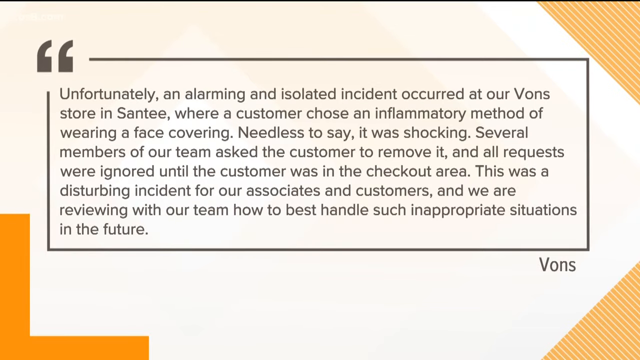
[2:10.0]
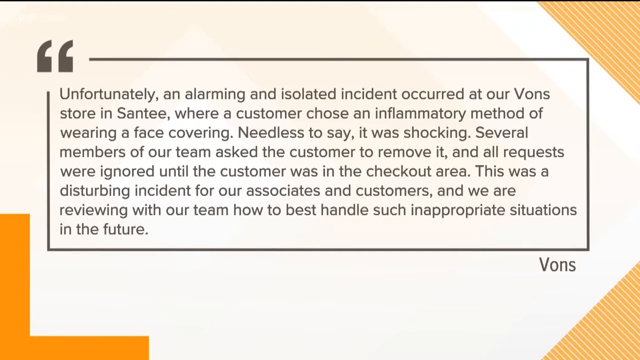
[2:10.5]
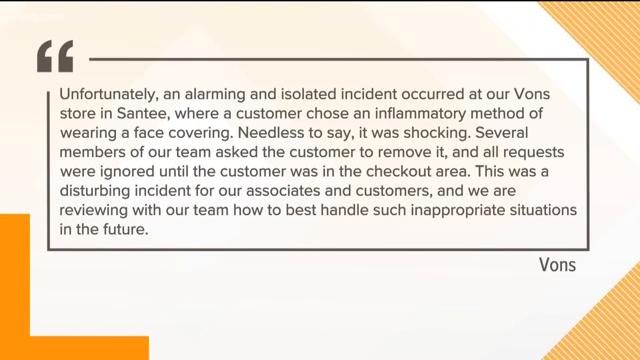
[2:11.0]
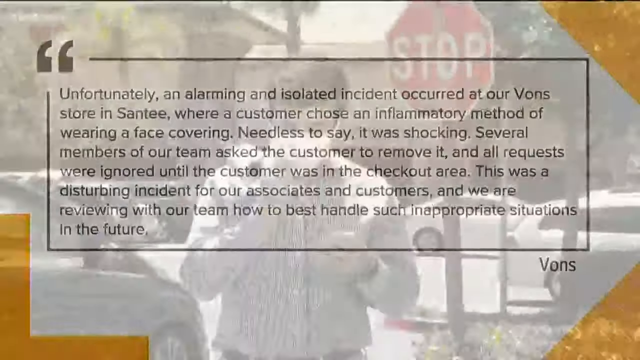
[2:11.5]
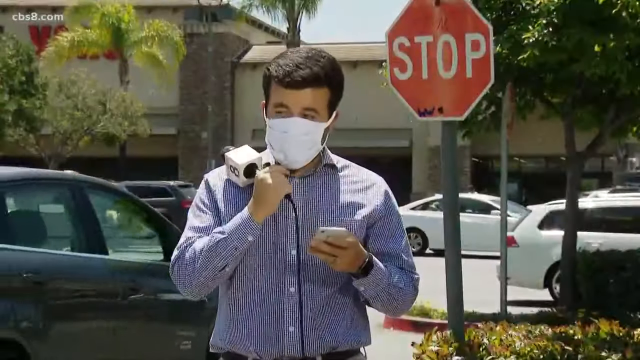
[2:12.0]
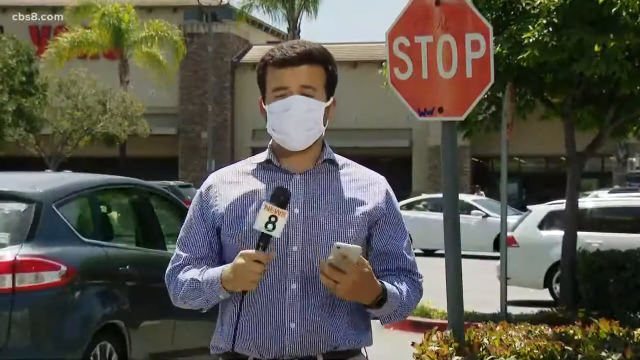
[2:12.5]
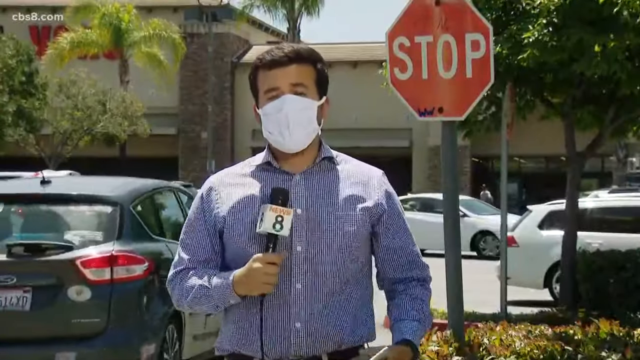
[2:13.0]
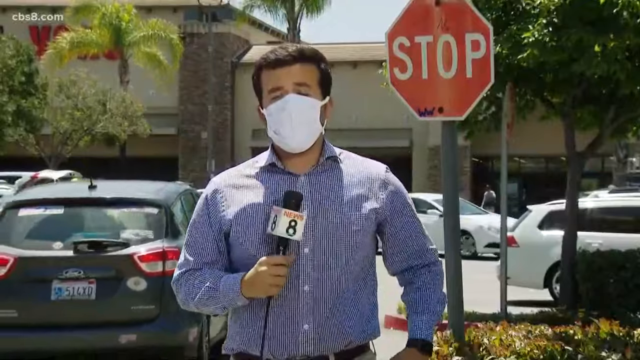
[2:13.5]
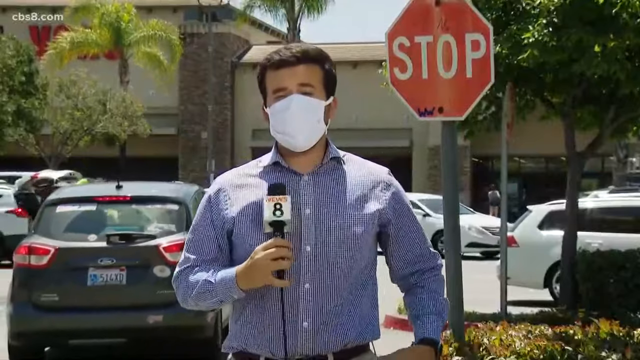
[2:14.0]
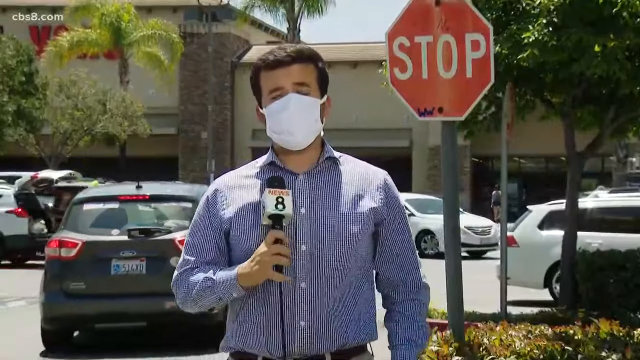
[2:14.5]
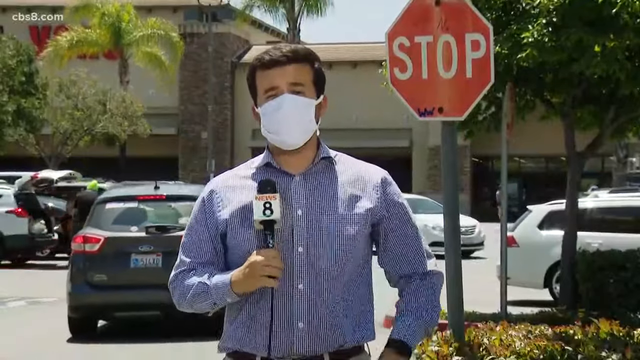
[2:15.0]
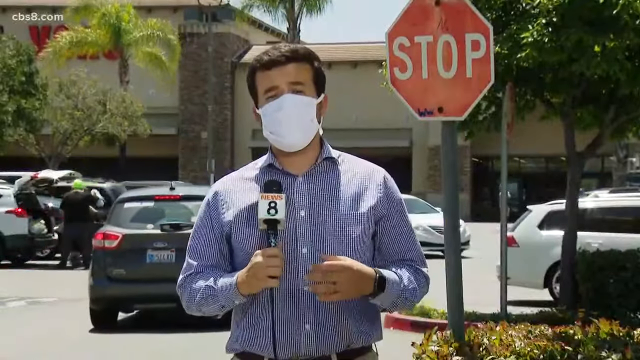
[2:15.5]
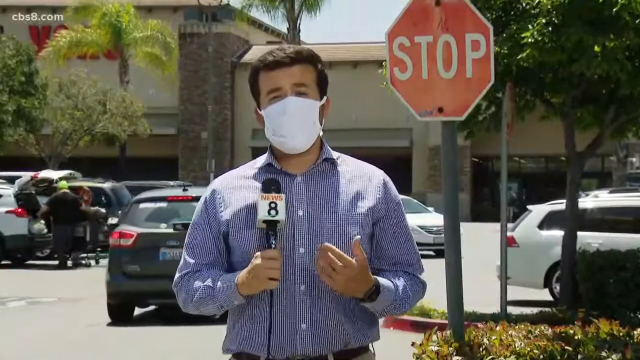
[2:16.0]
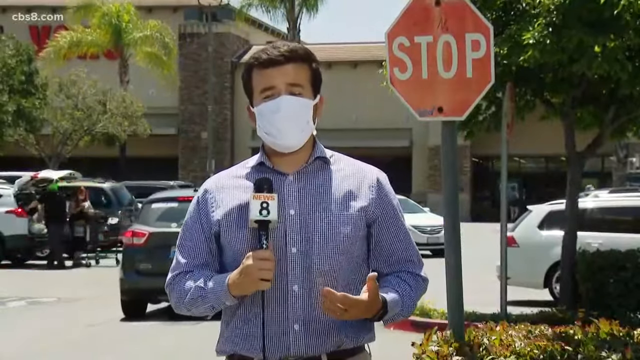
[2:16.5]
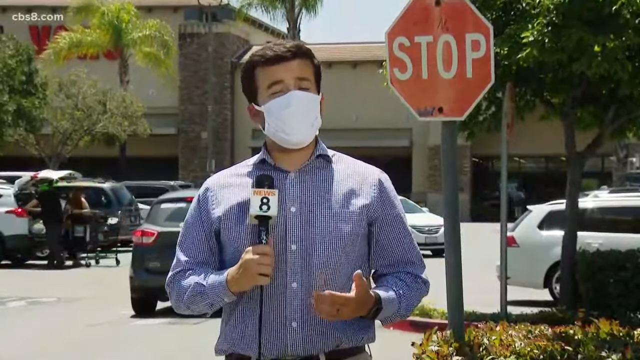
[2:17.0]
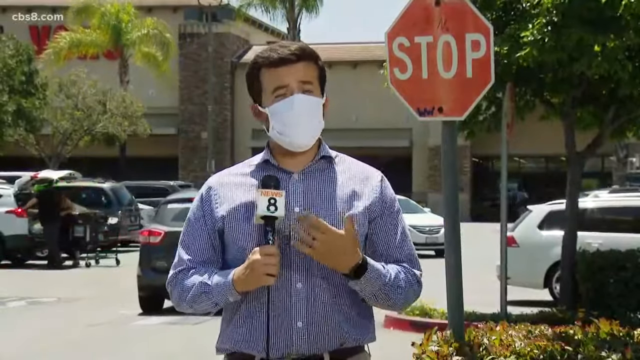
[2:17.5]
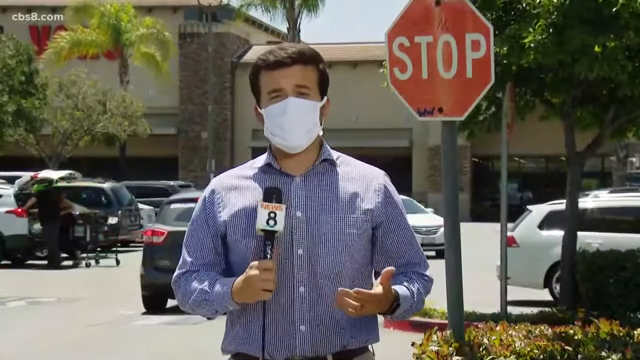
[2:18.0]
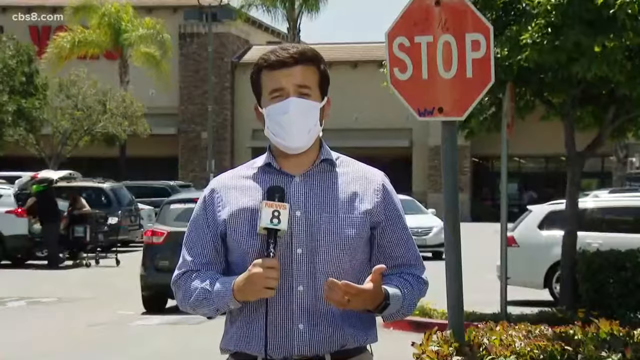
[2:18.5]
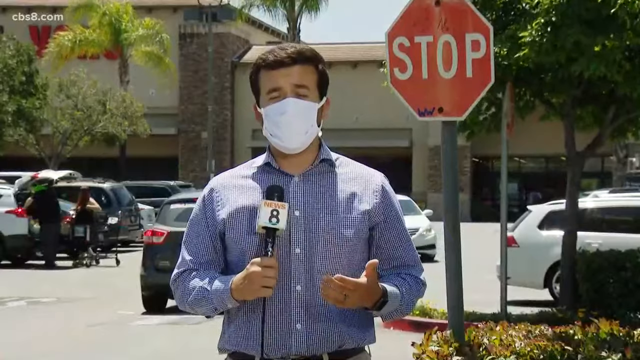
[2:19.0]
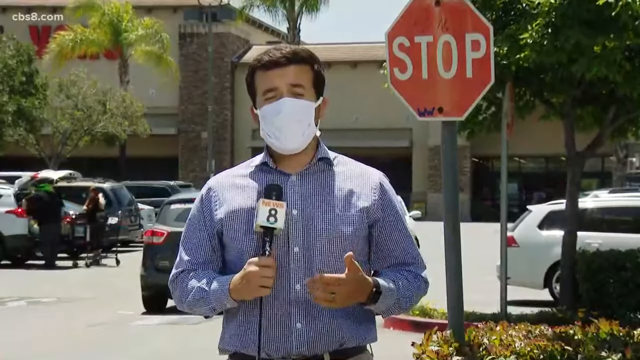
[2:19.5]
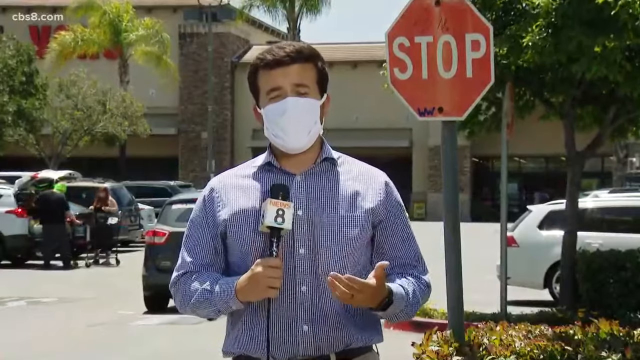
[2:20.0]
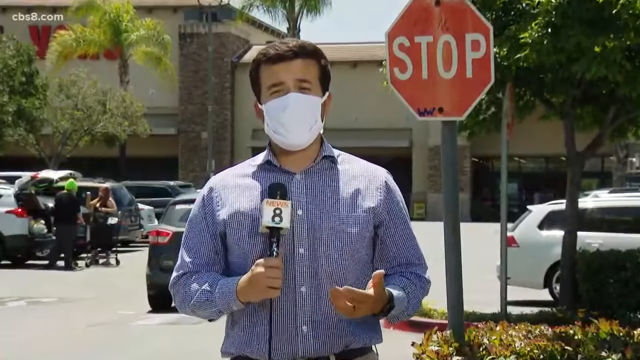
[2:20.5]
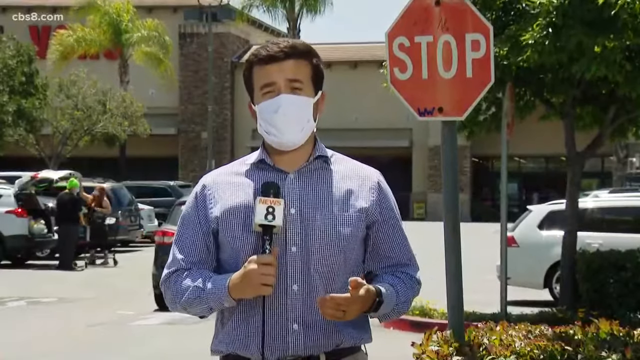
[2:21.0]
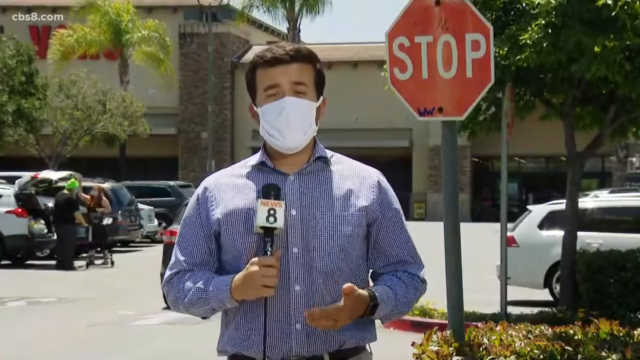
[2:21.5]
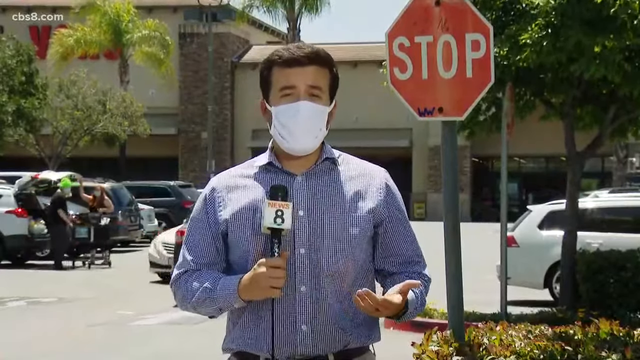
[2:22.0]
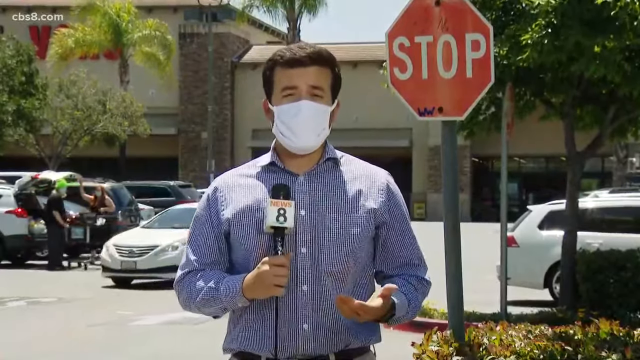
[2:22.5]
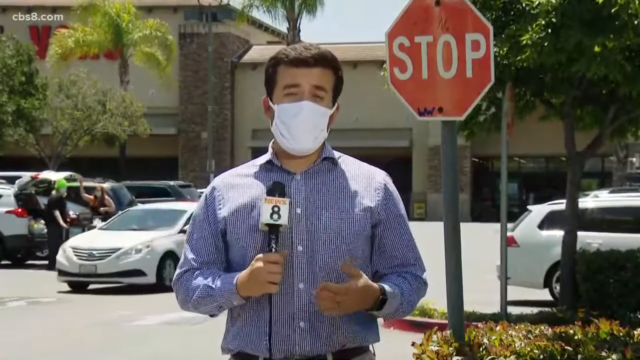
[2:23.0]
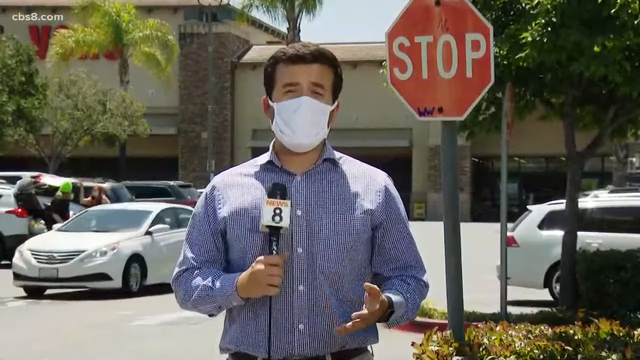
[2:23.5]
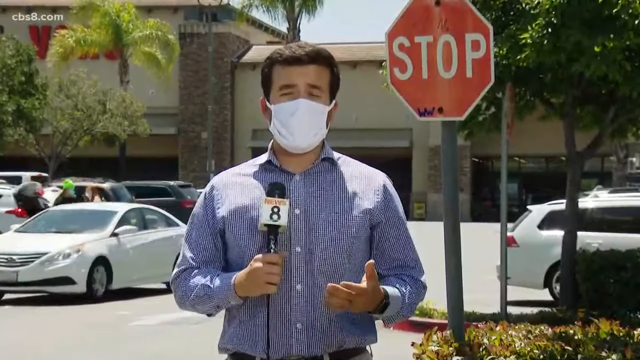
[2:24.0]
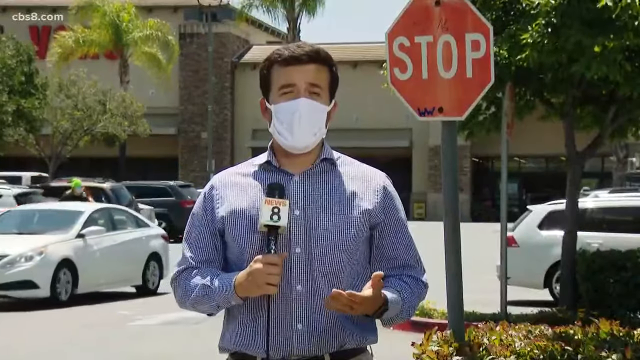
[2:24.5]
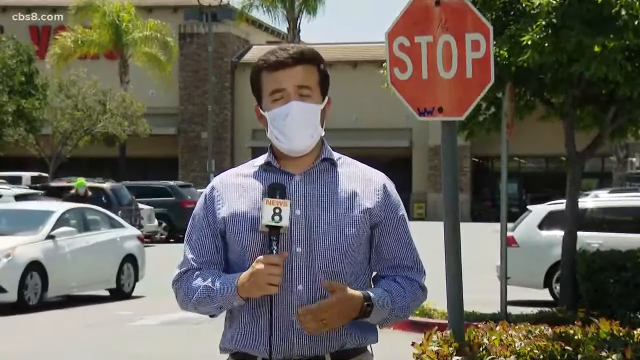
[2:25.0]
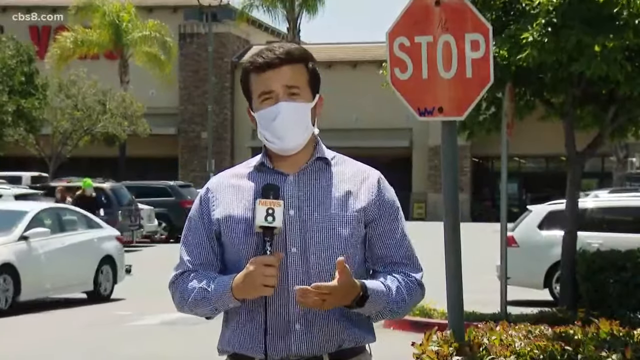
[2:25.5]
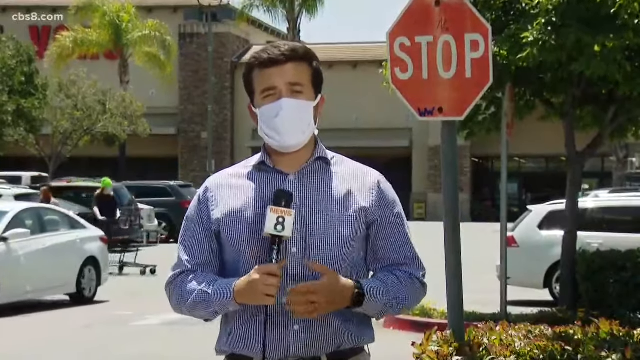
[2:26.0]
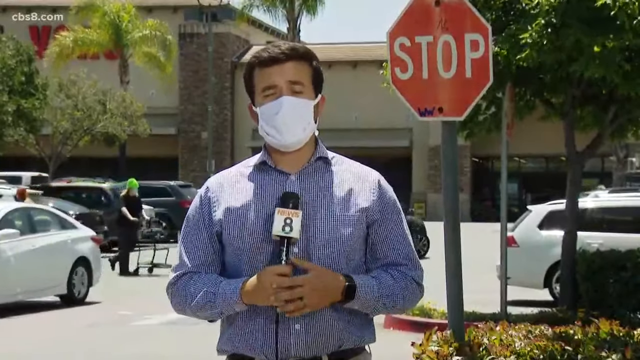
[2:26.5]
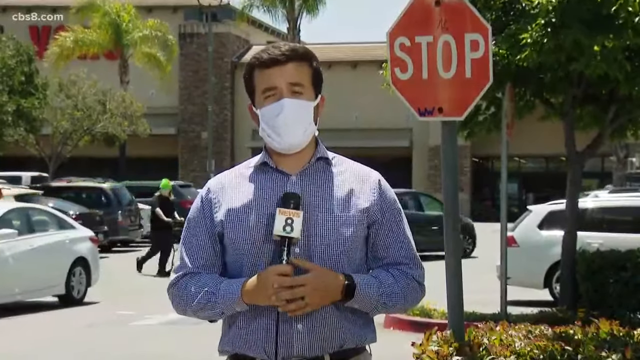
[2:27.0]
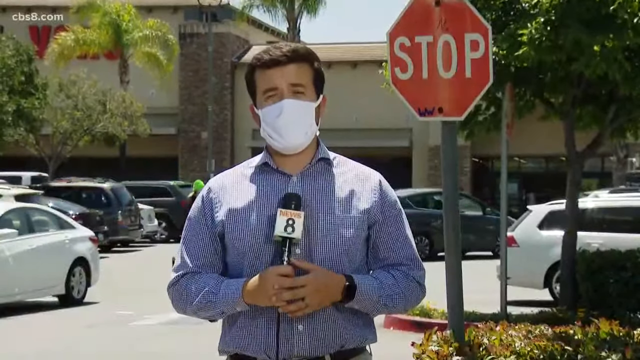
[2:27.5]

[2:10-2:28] The statement from Vaughn's, the store where the incident happened, is shown on a white backdrop with yellow in the corner and stays on screen for a couple of seconds. The video then returns to the man talking outside in front of the store, by the stop sign. Multiple trees are to the right and left, and cars pull in and out of the parking lot. On the left side, two people are putting groceries away in their car: one girl either has green hair or has a hat on, and the other has long red hair. The man wears a white mask and continues to talk, holding the microphone in his right hand, with a watch on his left wrist.